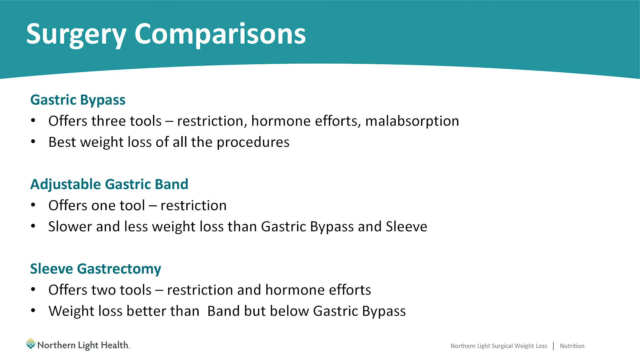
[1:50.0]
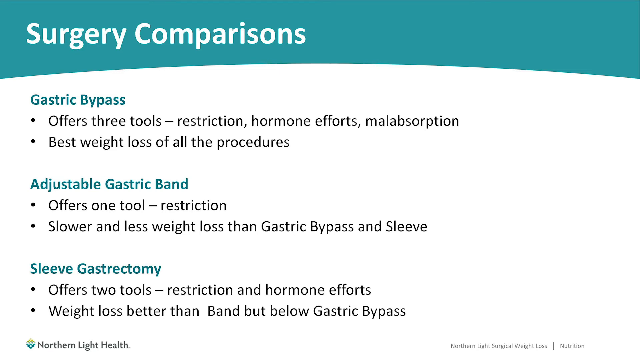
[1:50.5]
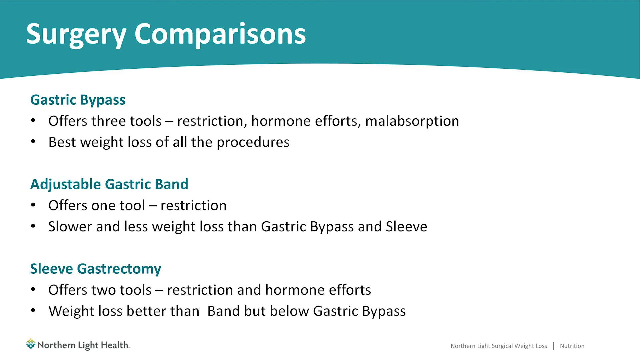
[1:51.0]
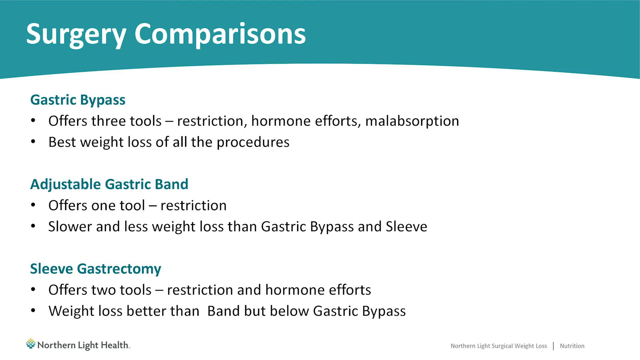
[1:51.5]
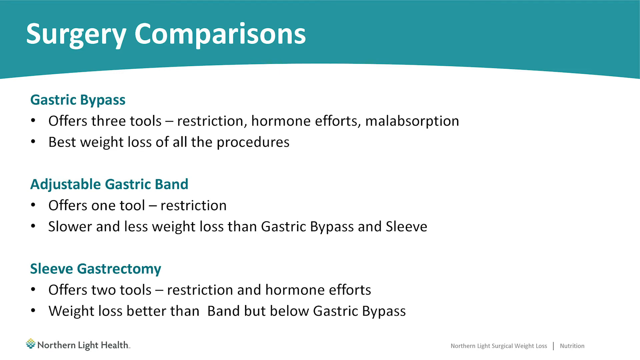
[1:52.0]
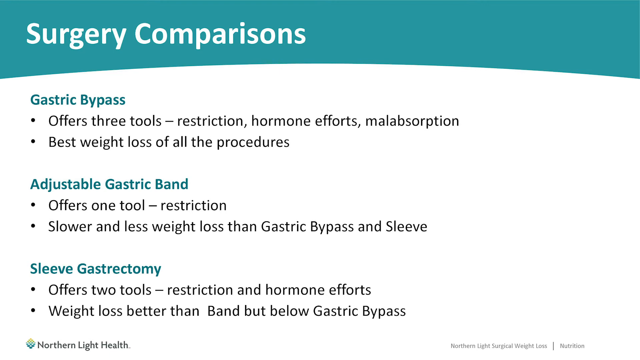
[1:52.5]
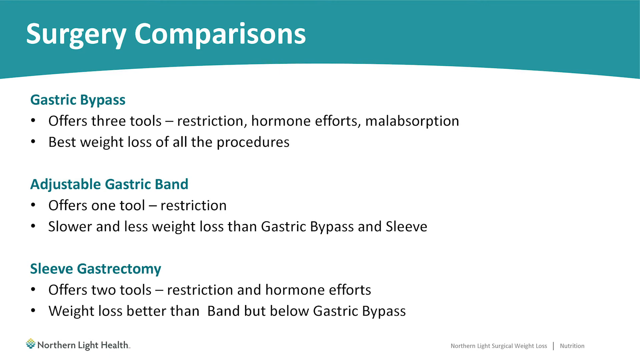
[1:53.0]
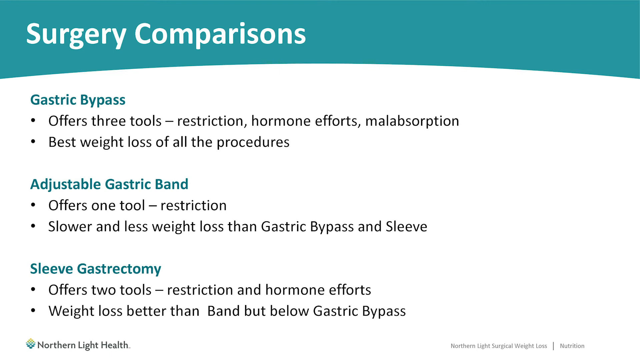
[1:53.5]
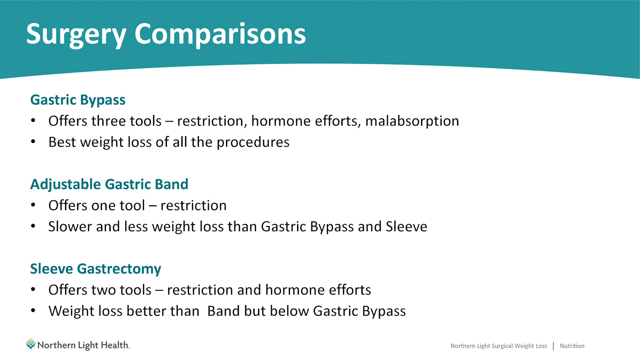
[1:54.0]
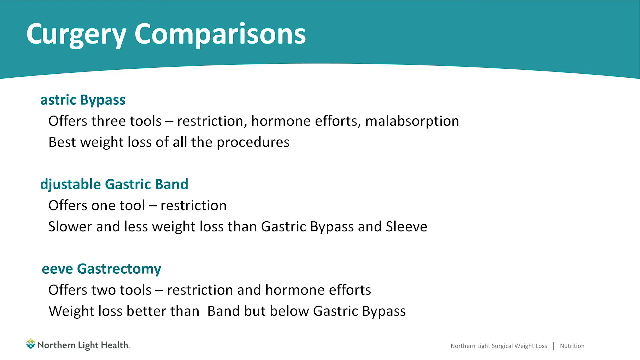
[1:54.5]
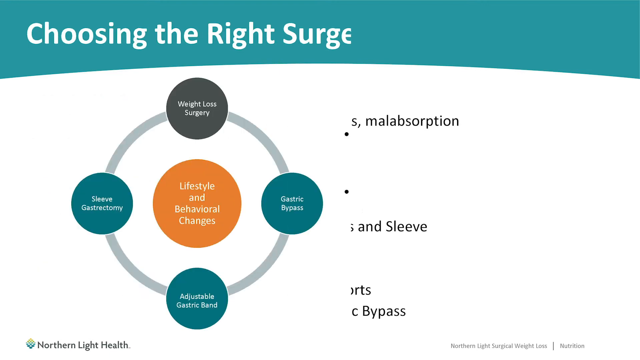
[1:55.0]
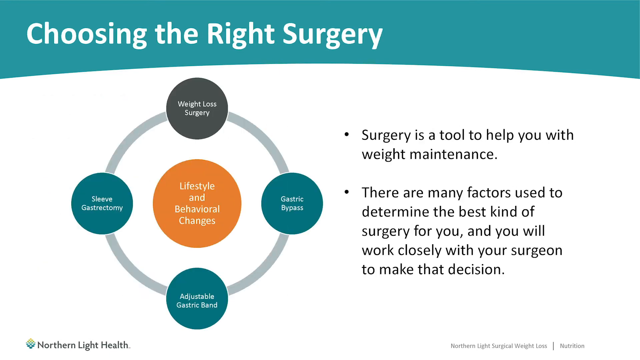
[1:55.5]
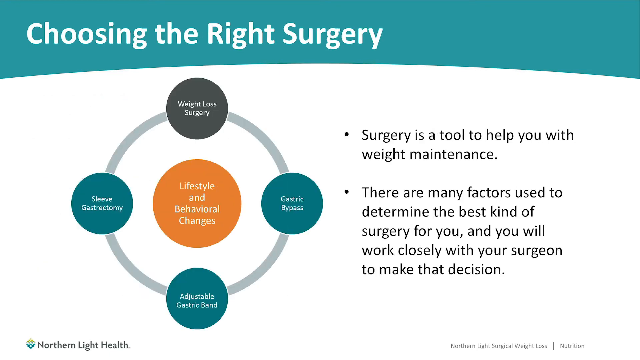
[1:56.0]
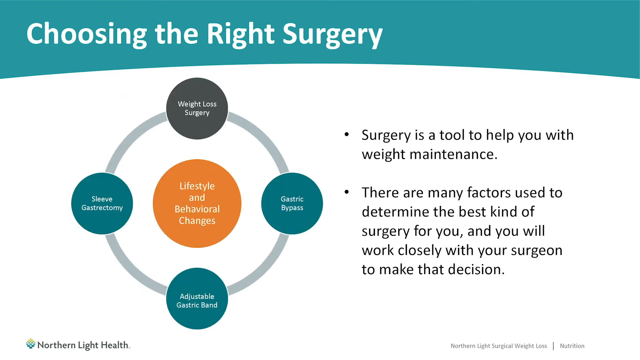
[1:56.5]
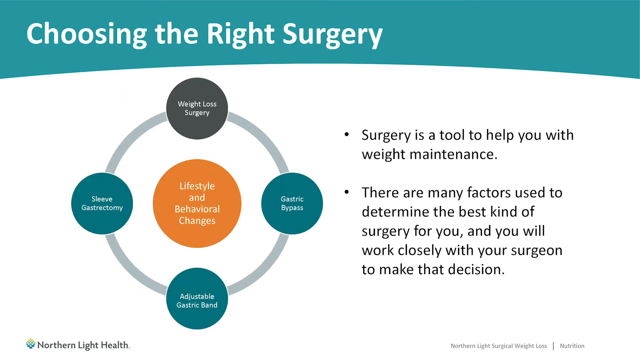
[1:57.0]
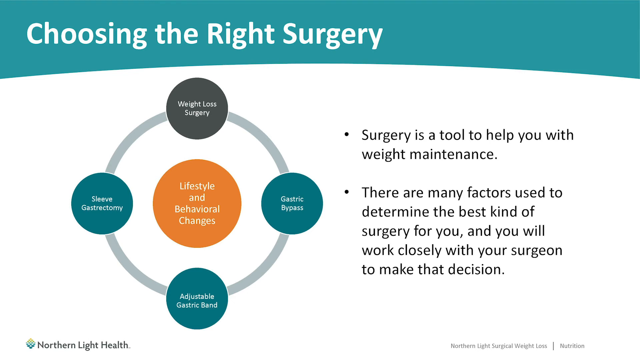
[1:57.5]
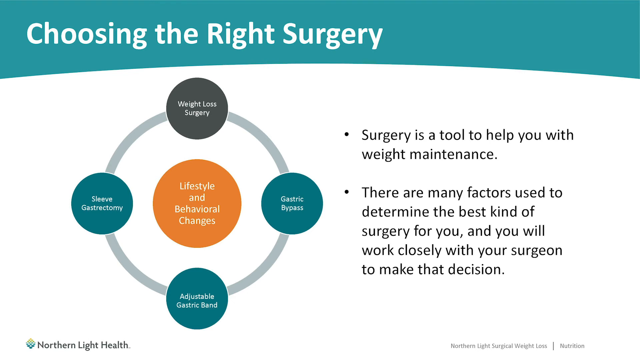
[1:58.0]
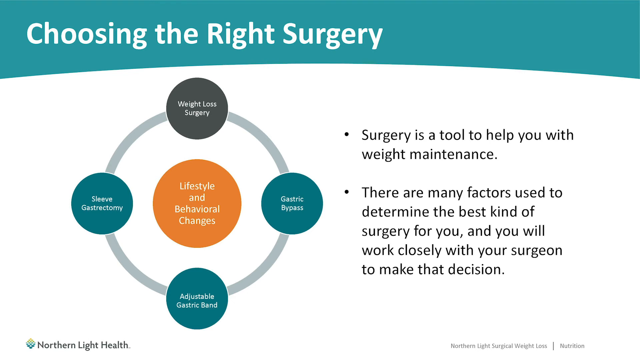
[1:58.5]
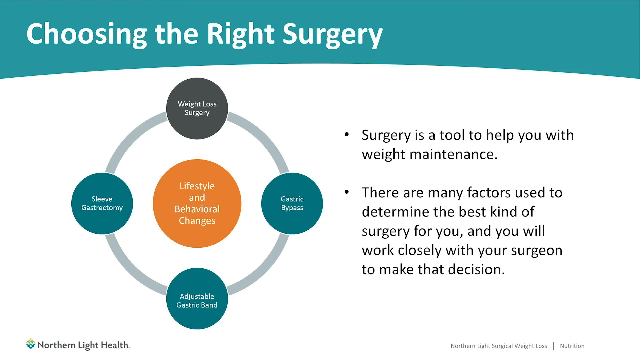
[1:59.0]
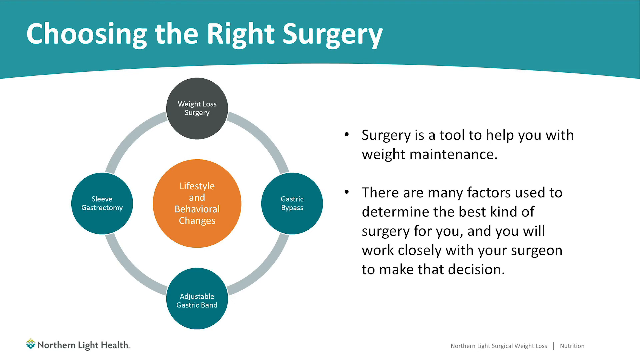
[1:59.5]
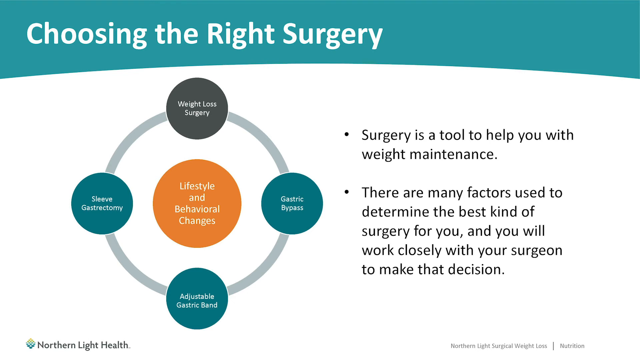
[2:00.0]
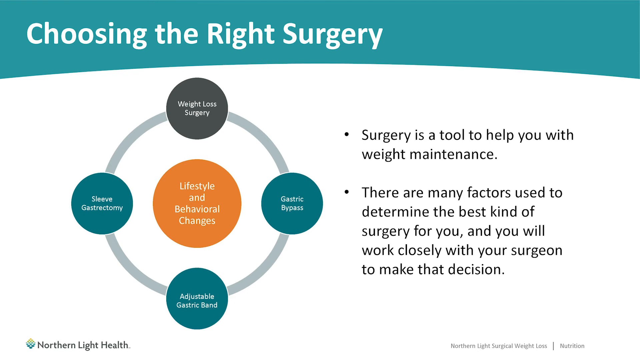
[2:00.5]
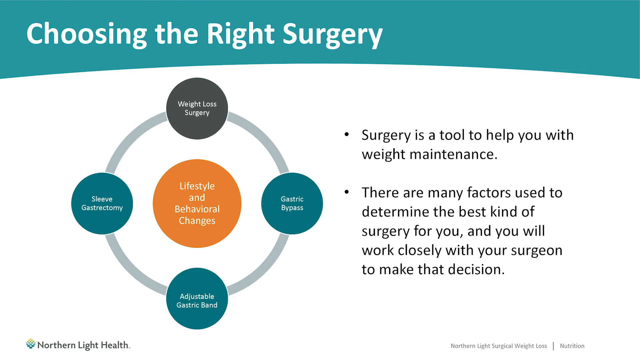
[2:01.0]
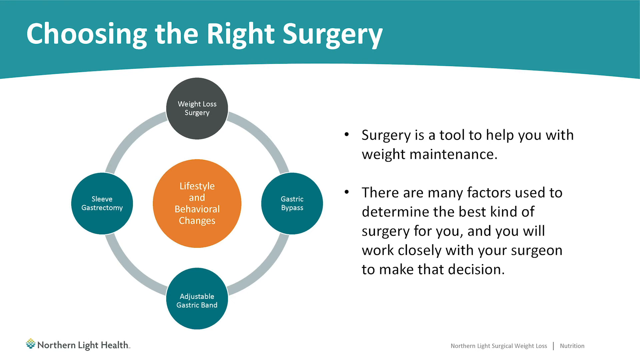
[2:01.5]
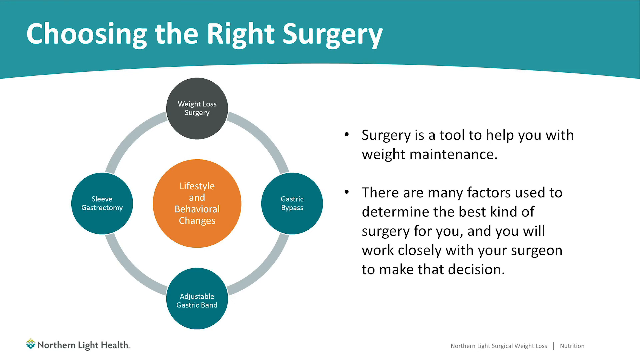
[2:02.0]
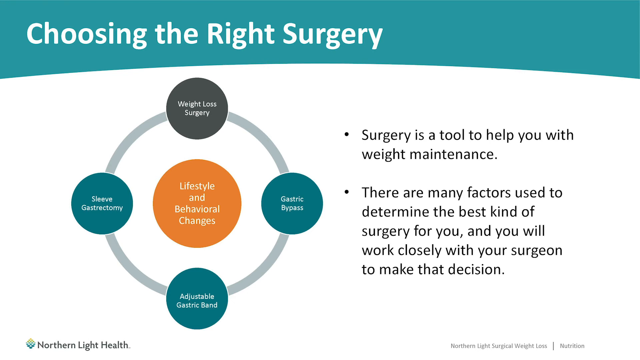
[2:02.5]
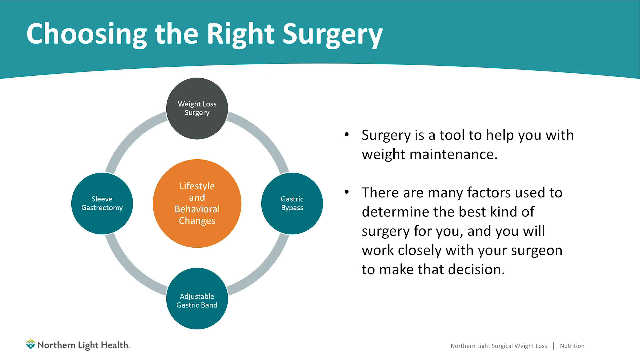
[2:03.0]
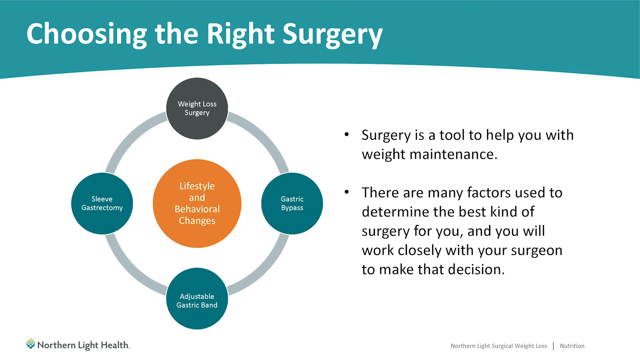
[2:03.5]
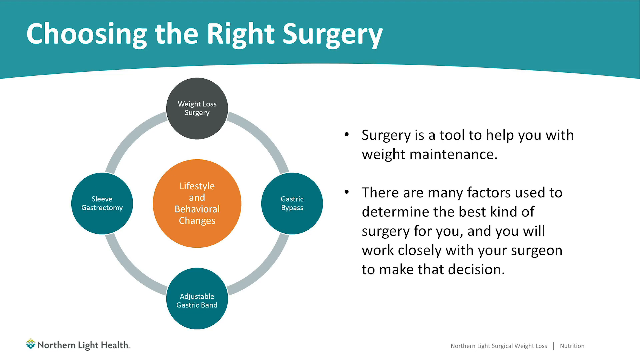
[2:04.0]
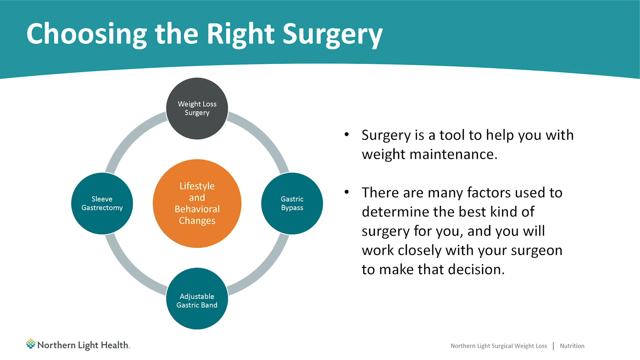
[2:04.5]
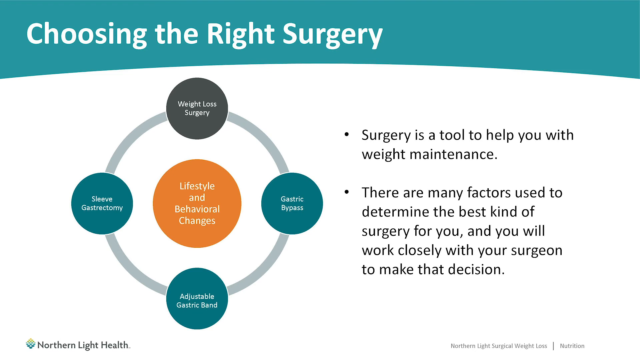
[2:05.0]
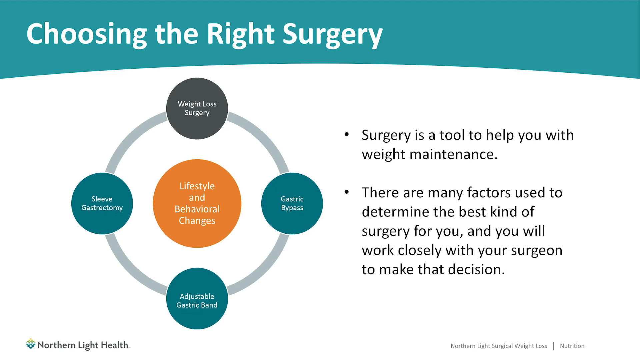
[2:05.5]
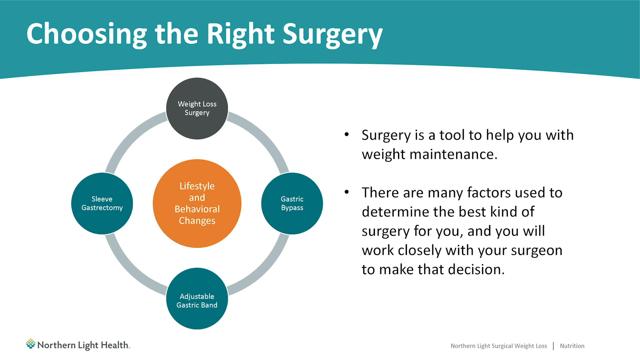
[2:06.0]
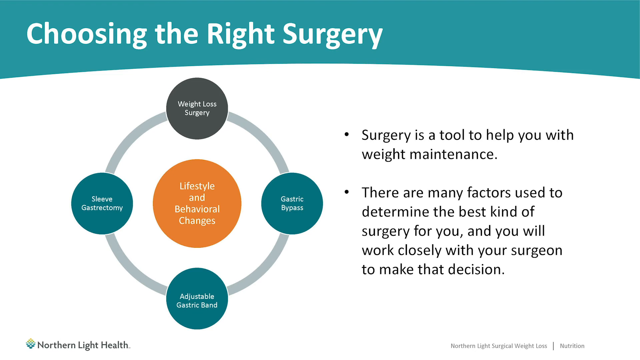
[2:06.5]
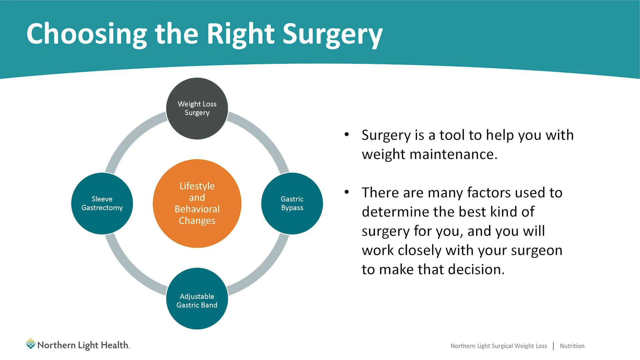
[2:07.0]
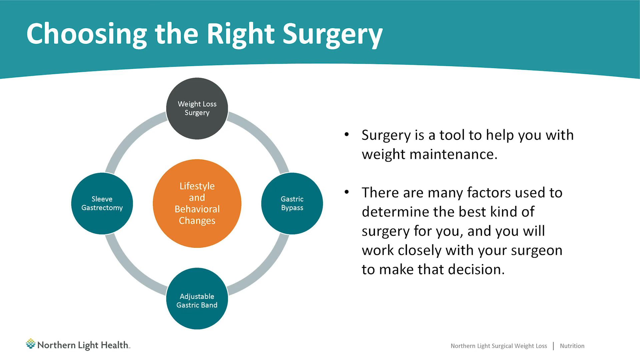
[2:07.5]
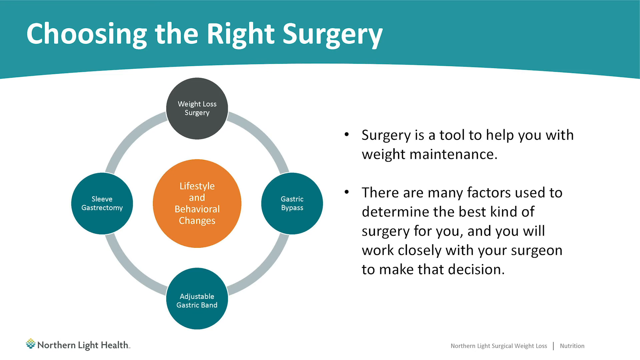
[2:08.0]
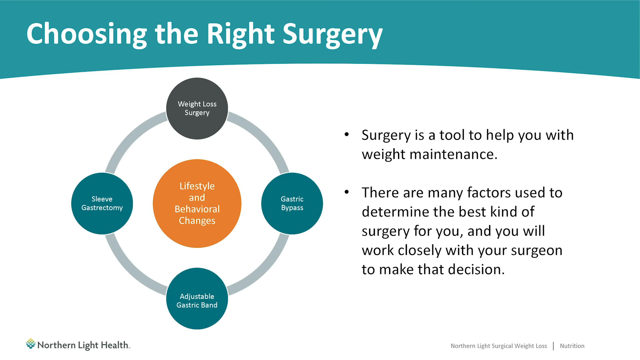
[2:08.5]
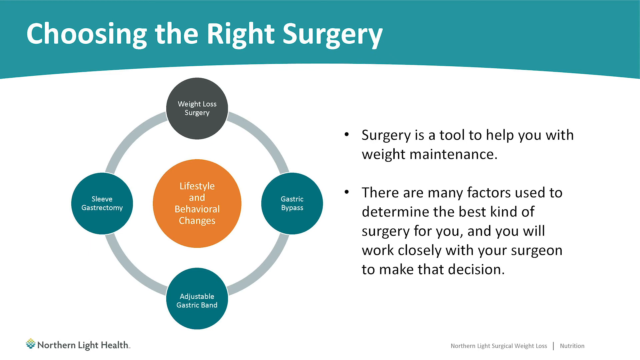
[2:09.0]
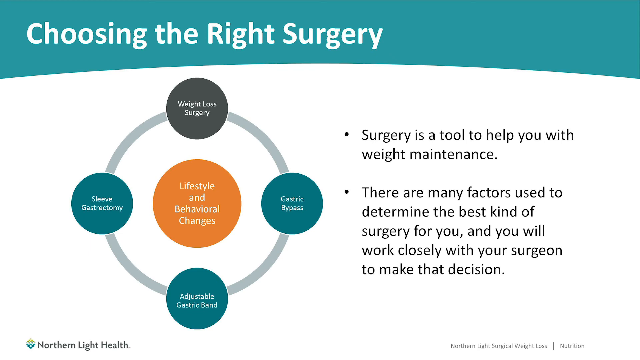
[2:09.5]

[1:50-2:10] The "Surgery Comparisons" slide with information on gastric bypass, adjustable gastric band, and sleeve gastrectomy is on screen first. Then the screen changes to a new title, "Choosing the Right Surgery." Two bullet points in black font on the right-hand side of the screen read "Surgery is a tool to help you with weight maintenance" and "There are many factors used to determine the best kind of surgery for you, and you will work closely with your surgeon to make that decision." On the left-hand side is a diagram with a gray circle on top that says "weight loss surgery," a blue circle to the right that says "gastric bypass," a blue circle at the bottom that says "adjustable gastric band," and a blue circle to the left that says "sleeve gastrectomy." In the center of these circles is an orange circle that says "lifestyle and behavioral changes." Everything is set against a white background, with a yellow, green, and blue logo reading "Northern Light Health" in the bottom left-hand corner and small black words, too small to read, in the bottom right-hand corner.